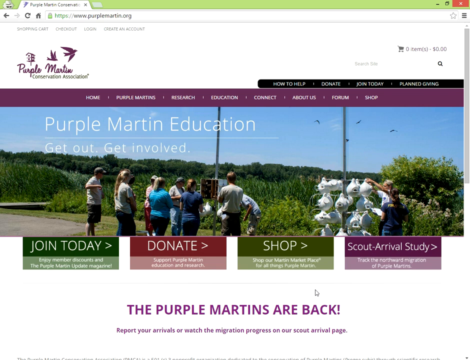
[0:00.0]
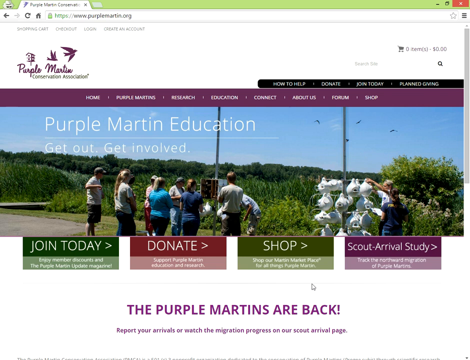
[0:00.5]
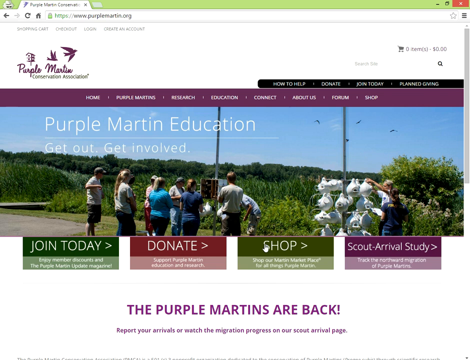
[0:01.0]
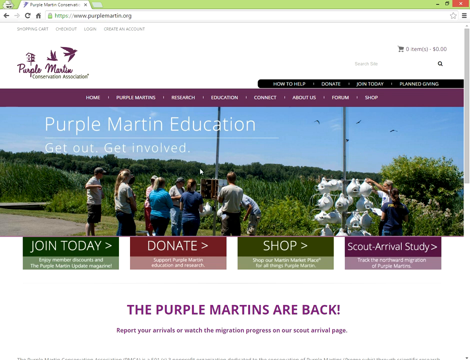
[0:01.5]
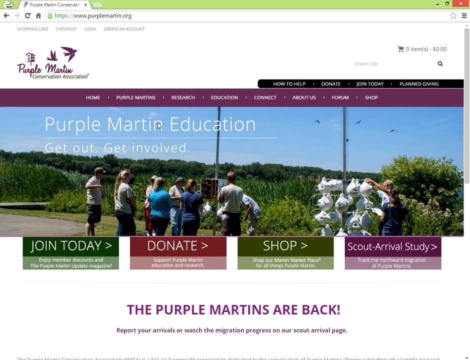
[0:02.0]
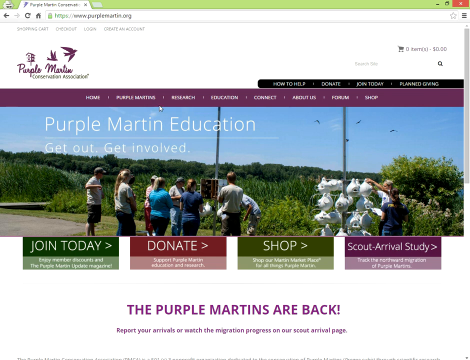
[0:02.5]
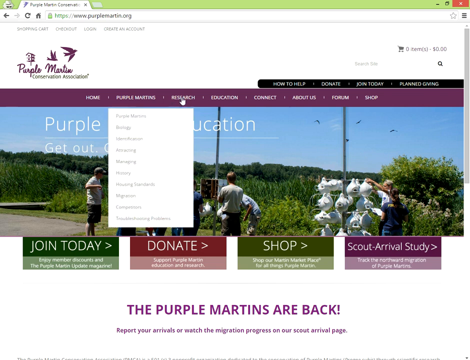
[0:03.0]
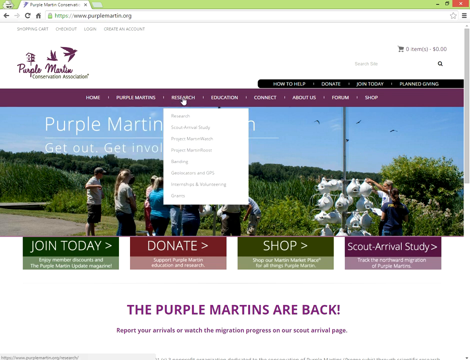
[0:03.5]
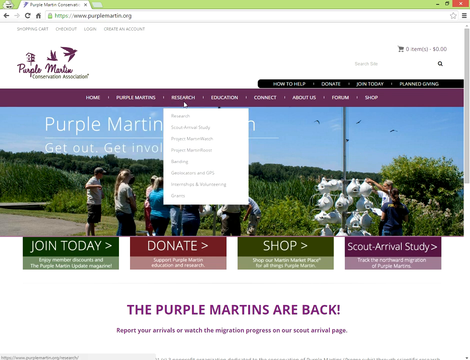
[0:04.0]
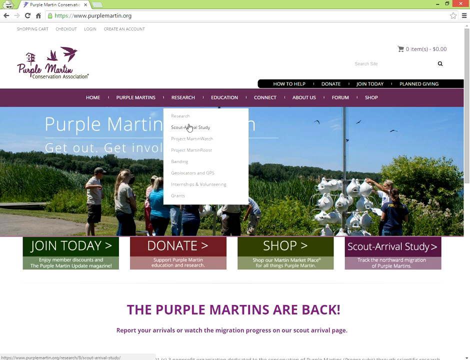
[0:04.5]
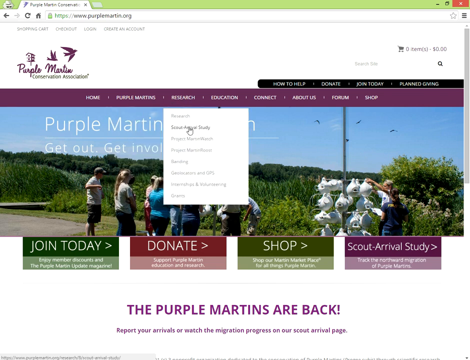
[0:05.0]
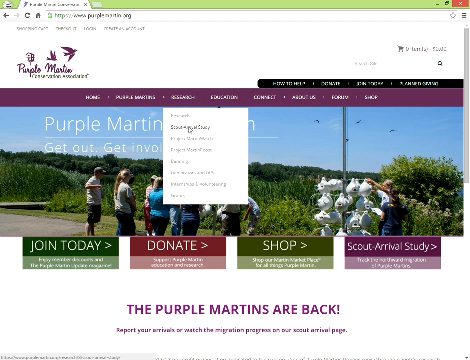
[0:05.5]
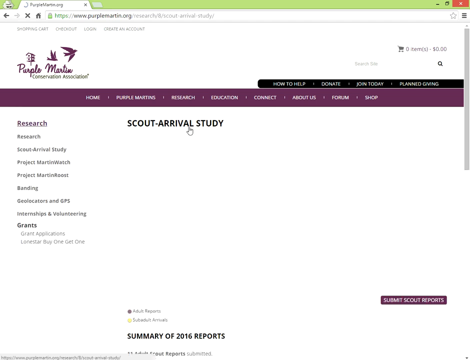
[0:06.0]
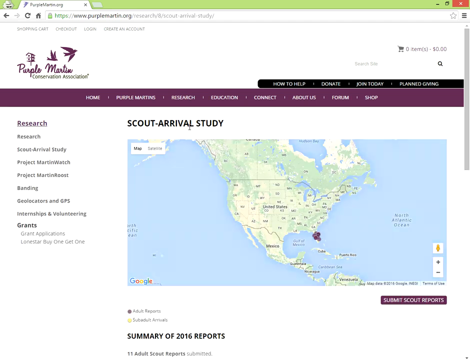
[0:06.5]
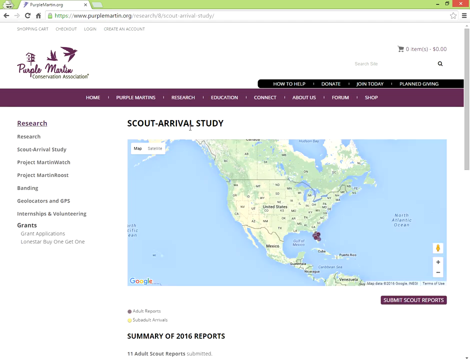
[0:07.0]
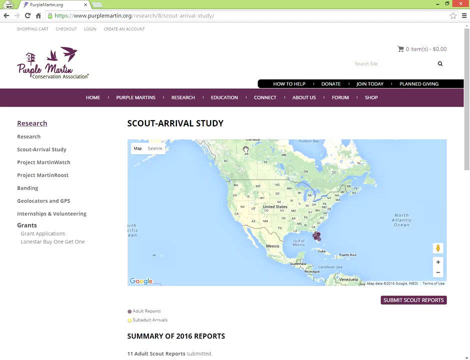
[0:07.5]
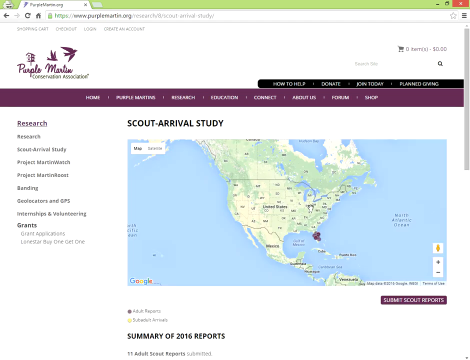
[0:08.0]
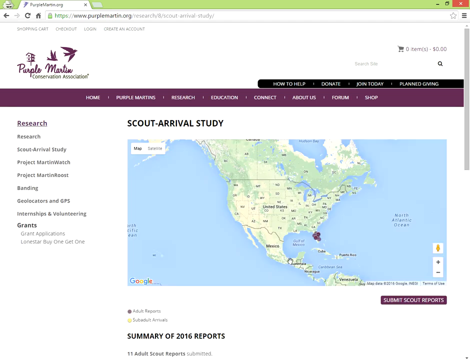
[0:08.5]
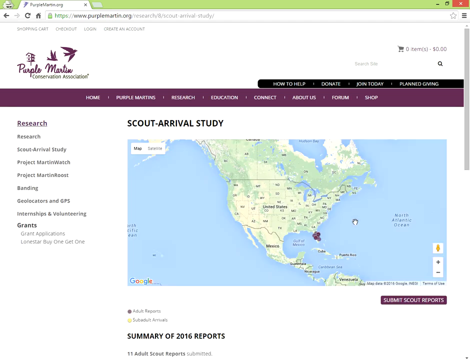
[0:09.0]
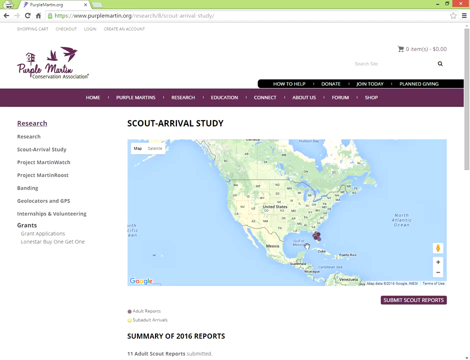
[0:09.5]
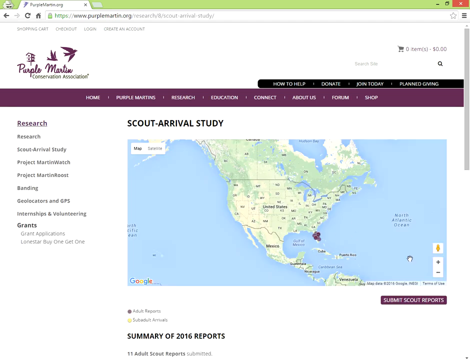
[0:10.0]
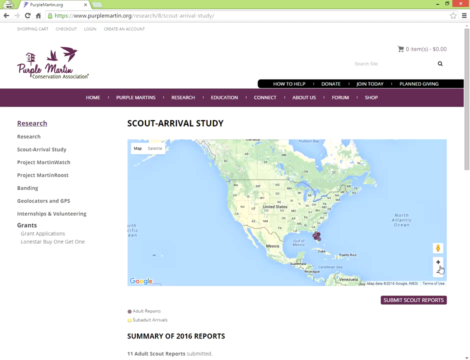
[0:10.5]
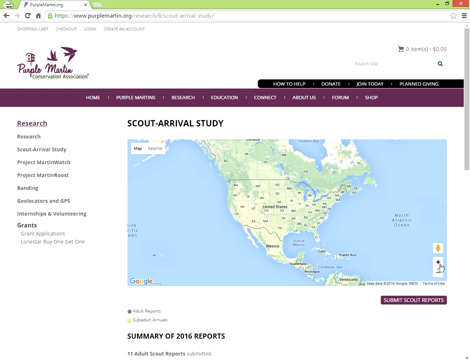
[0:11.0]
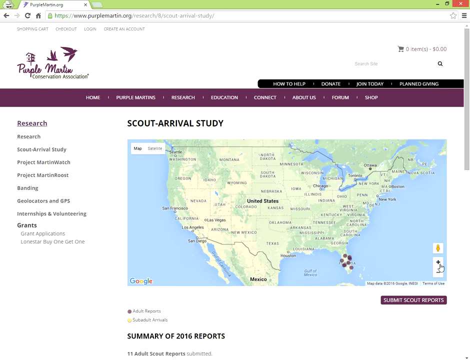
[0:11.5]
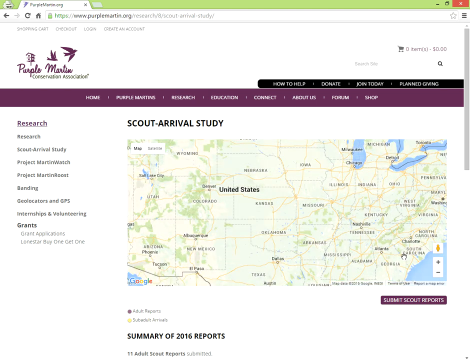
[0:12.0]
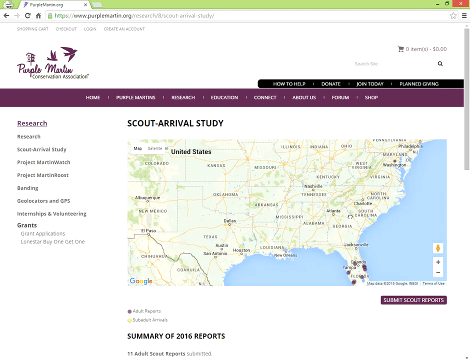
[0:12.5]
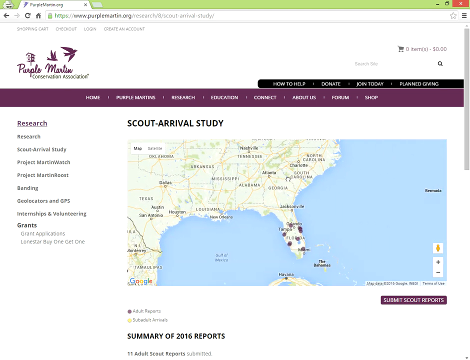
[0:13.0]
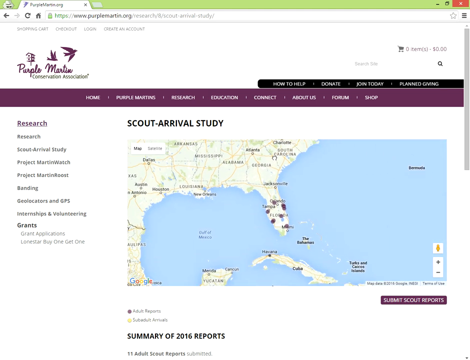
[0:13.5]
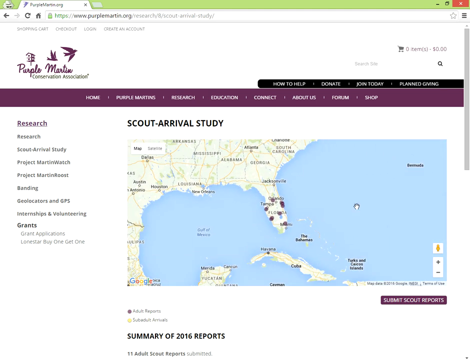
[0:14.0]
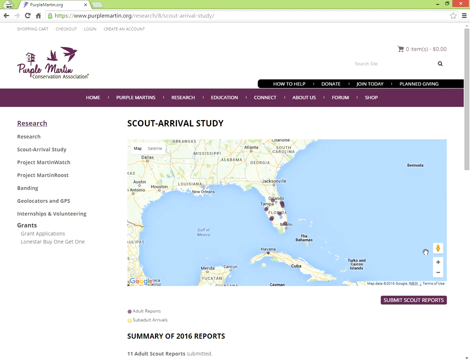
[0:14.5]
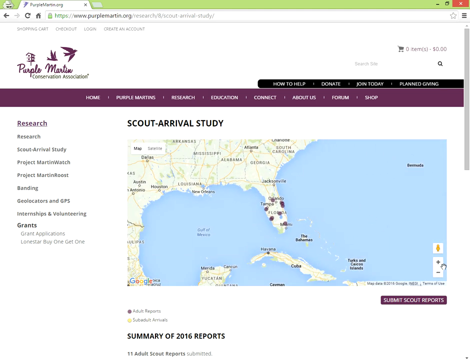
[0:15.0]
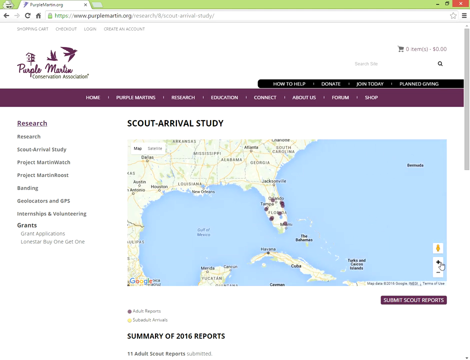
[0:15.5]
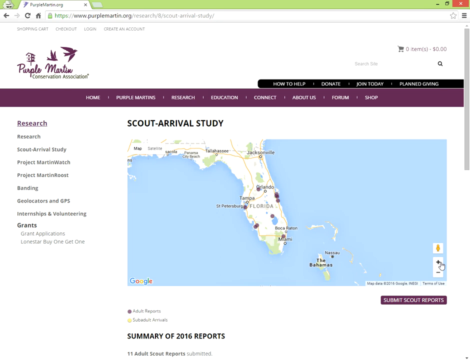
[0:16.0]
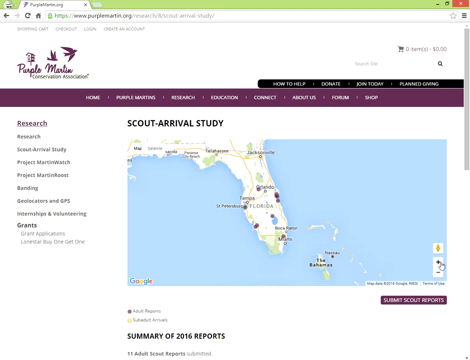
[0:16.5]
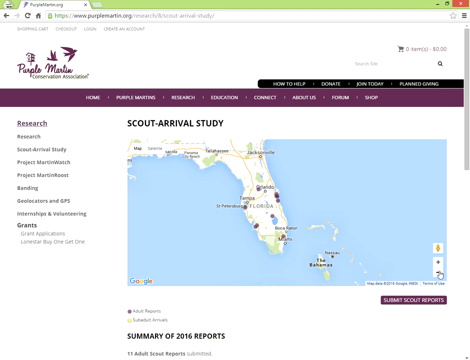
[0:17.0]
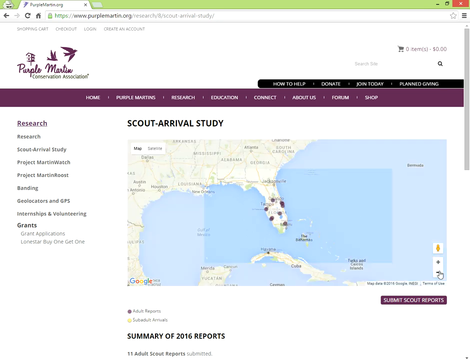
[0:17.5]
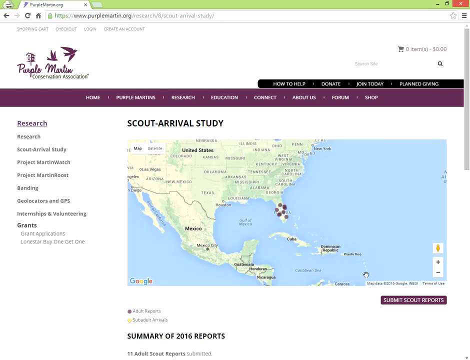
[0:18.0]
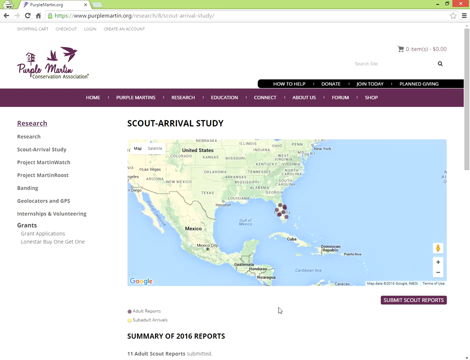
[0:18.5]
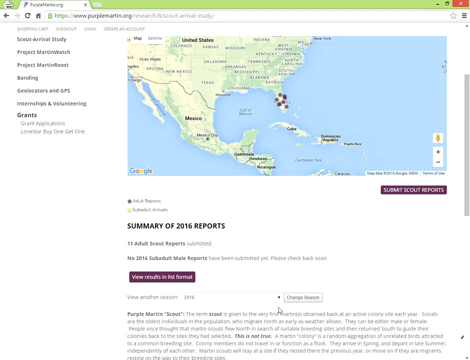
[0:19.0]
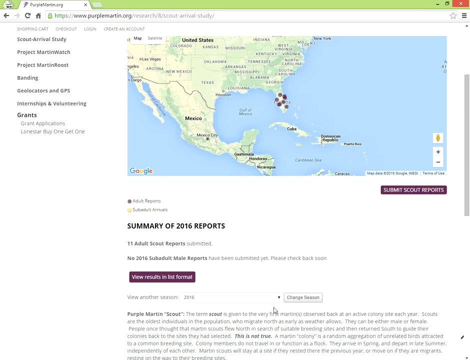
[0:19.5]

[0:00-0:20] A screenshot of the Purple Martin Conservation Association website is on the screen, with the web address purplemartin.org. The top of the website is white. The main accent color is dark purple, along with dark red and two shades of dark green. A large photo spans the middle of the page, and over it the text reads "Purple Martin education. Get out, get involved." Under the large photo on the homepage are four buttons reading "Join today", "Donate", "Shop", and "Scout arrivals study". Below them is a headline for some text, reading "The Purple Martins are back!" with an exclamation point. The mouse cursor moves under research and goes to scout arrival study, which loads a map. The user zooms the map in on Florida, showing several dots there, and then zooms out.